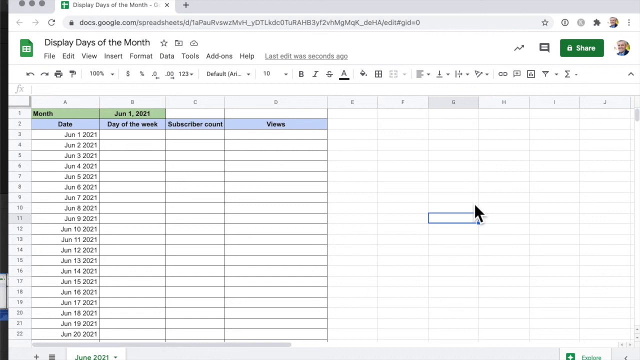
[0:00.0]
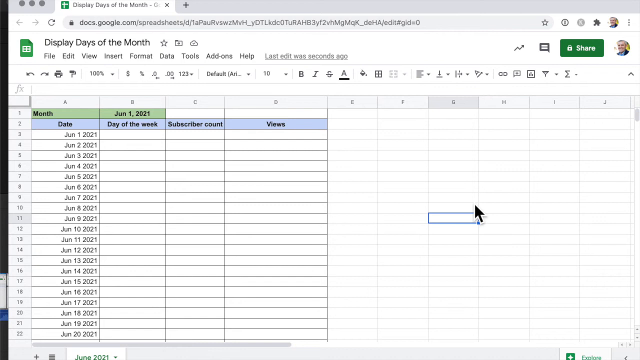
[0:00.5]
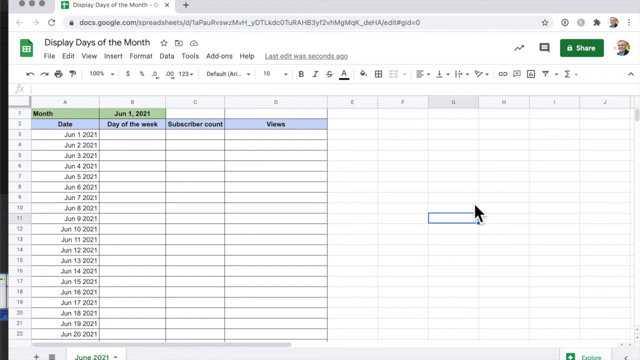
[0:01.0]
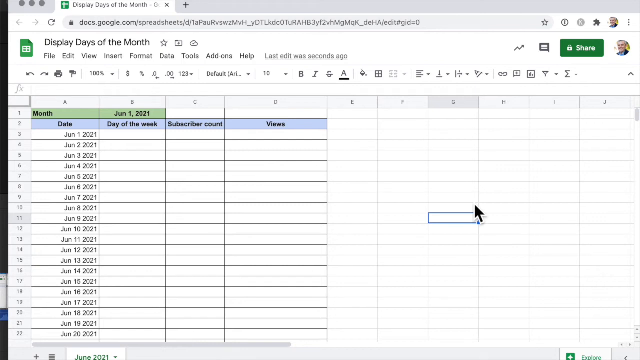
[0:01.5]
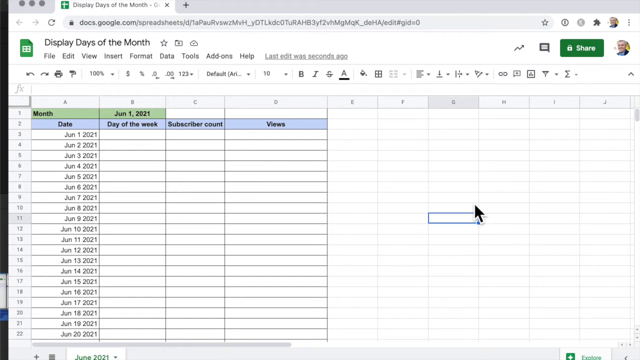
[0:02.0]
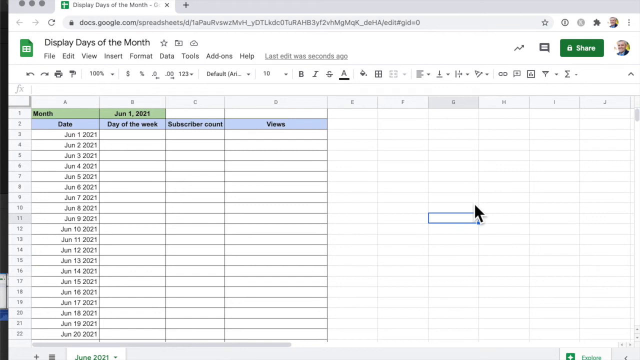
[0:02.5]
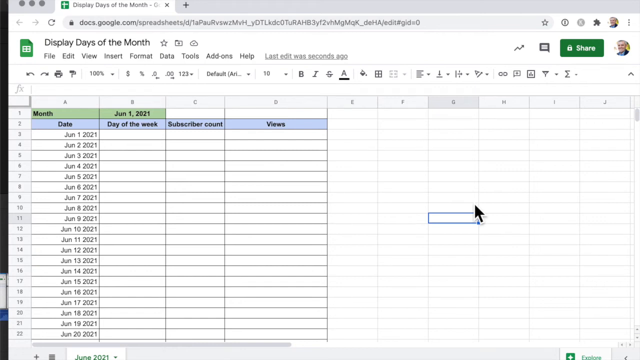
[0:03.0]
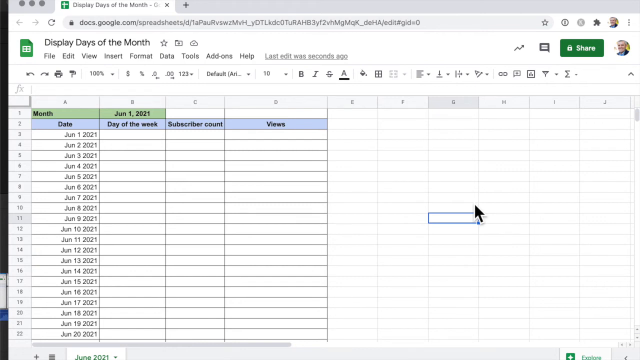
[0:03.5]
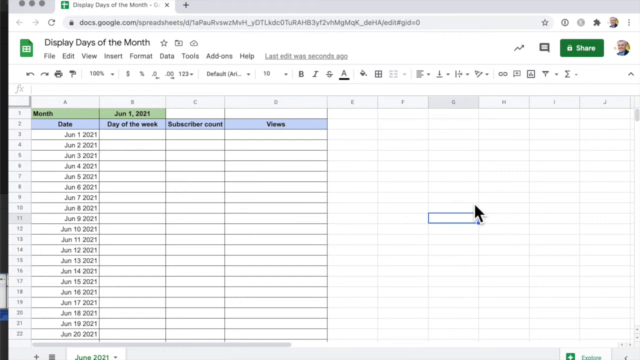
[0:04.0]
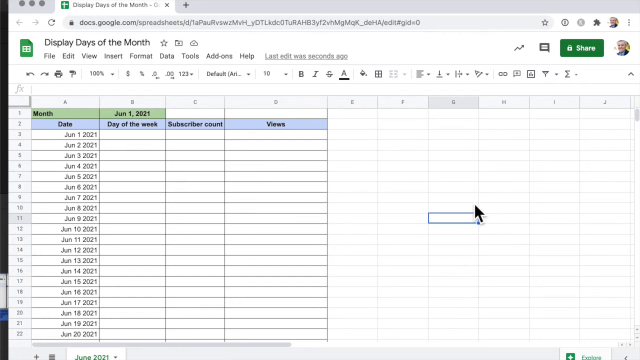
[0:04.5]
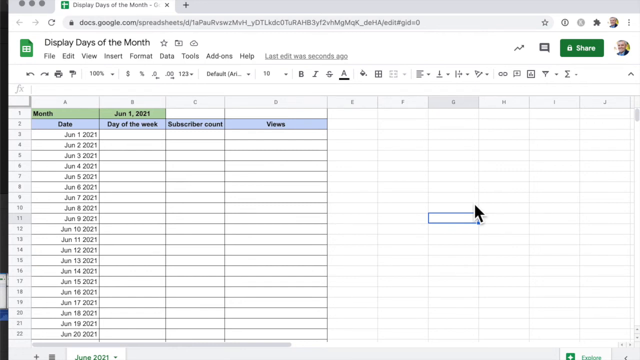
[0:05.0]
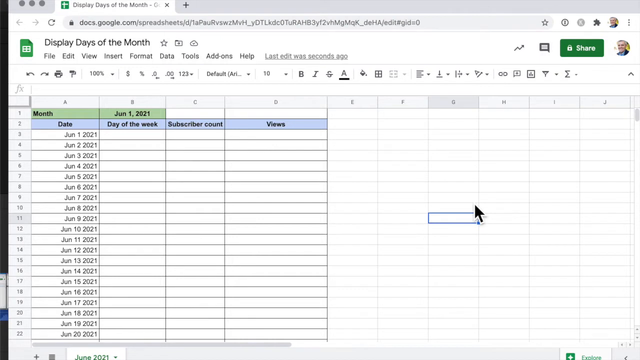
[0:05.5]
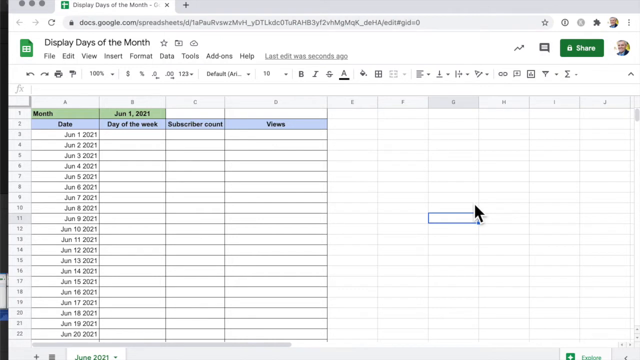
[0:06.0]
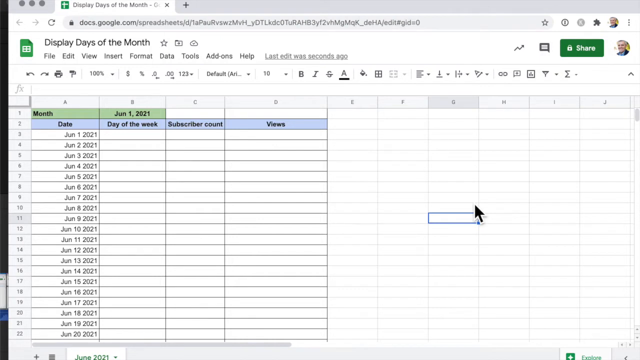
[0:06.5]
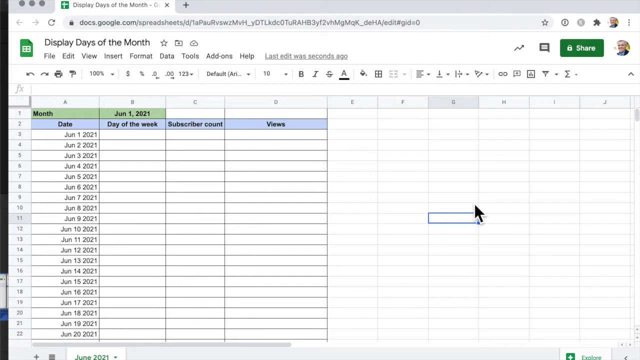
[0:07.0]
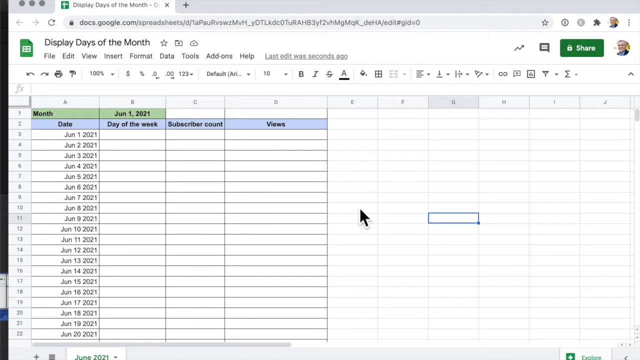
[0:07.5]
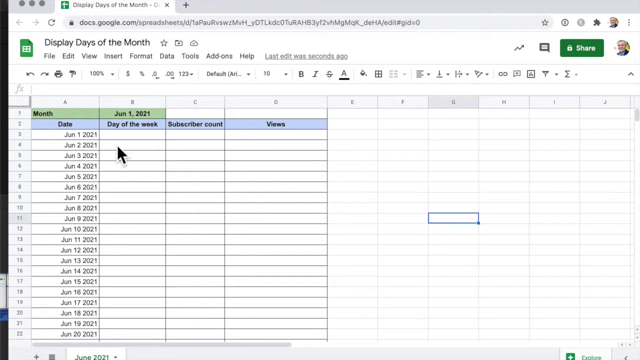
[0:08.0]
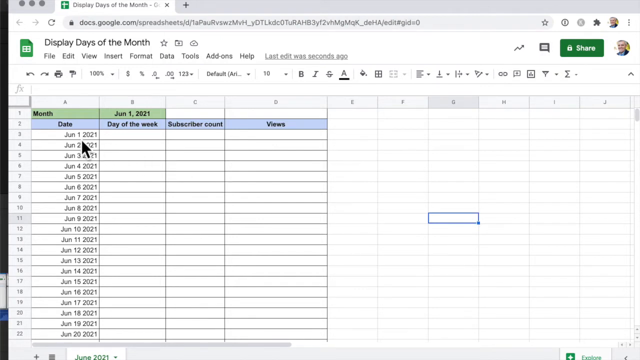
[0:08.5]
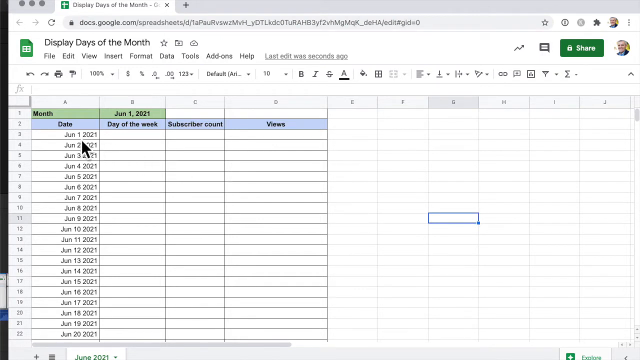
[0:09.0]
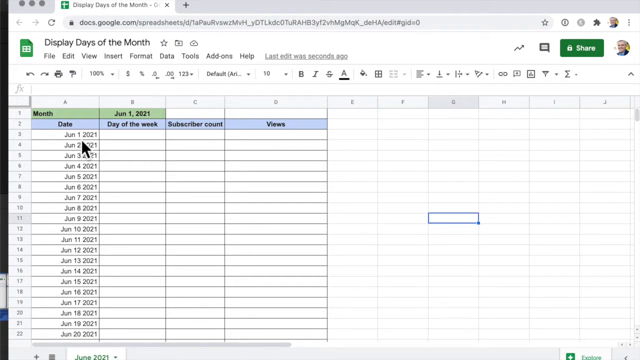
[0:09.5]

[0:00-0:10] A spreadsheet is displayed with text that says "display days of the month." The cursor goes to the top left of the screen and hovers over what appears to be June 21st, 2021. Down the left side is a column of dates that increase going down, starting with the 1st of June and running into the 20s. At the top there is a box that says "month" in green, and to the right of it another box, also in green, that says "June 1st, 2021." Underneath is a section in blue with headings that say "date," "days of the week," "subscriber count" and "views." The cursor hovers over to the left side of the screen.